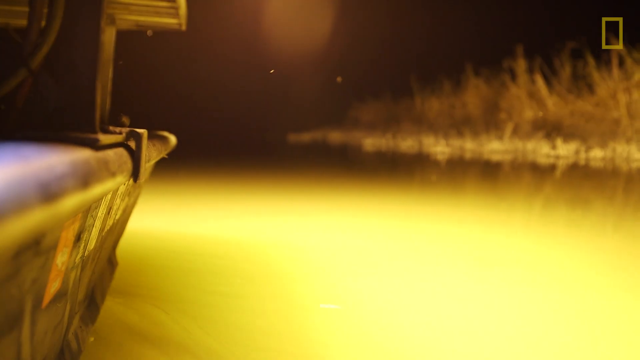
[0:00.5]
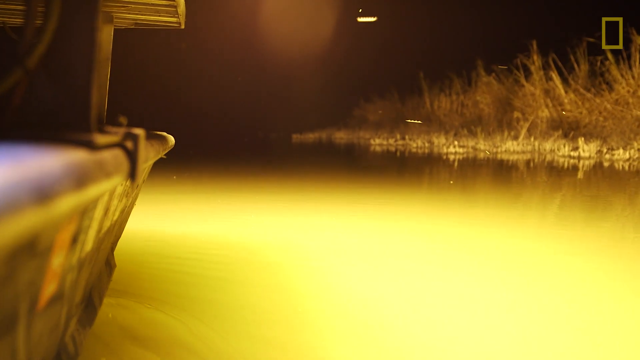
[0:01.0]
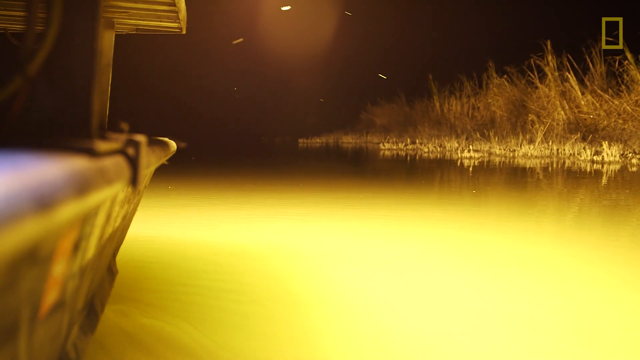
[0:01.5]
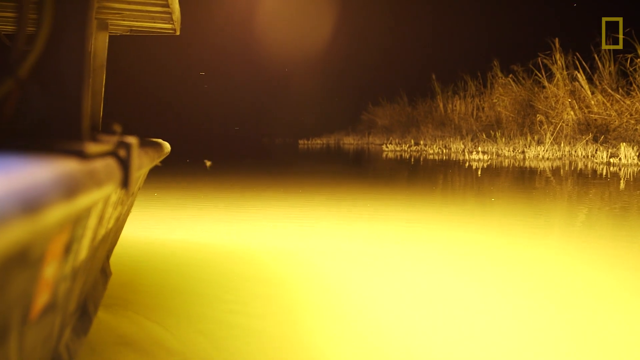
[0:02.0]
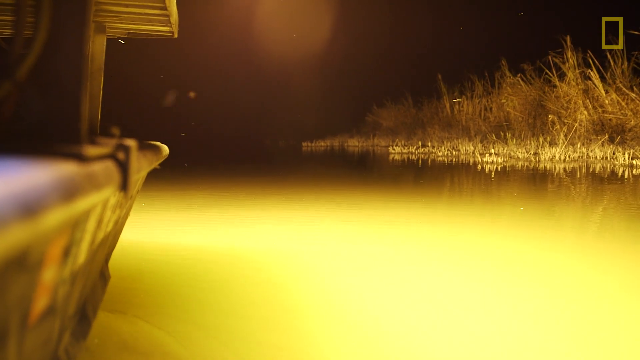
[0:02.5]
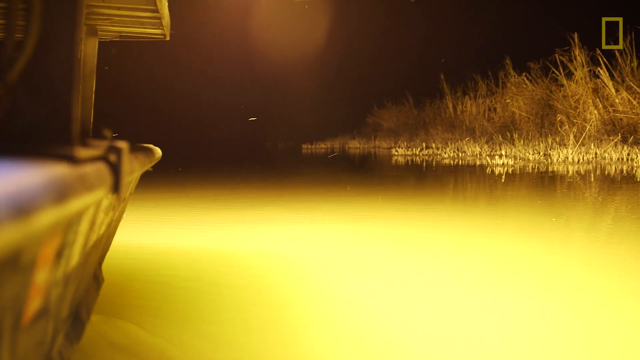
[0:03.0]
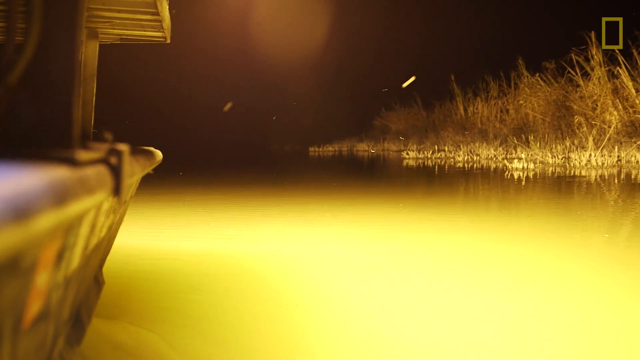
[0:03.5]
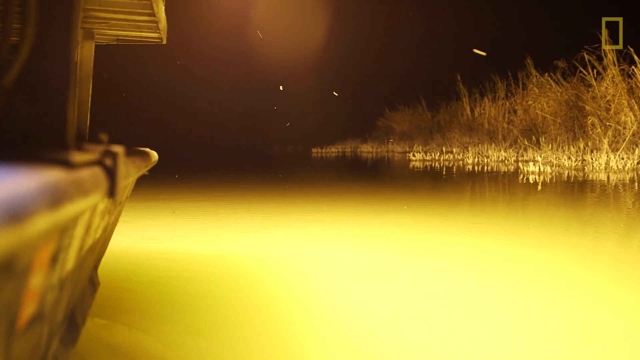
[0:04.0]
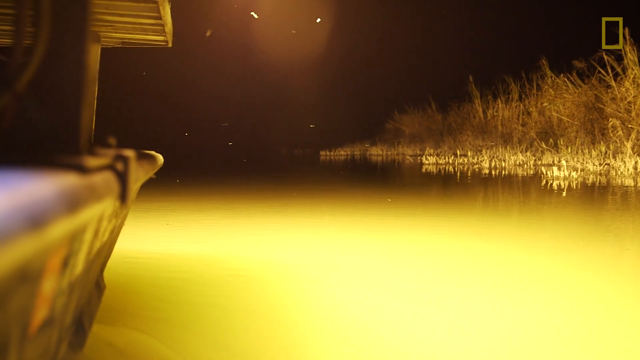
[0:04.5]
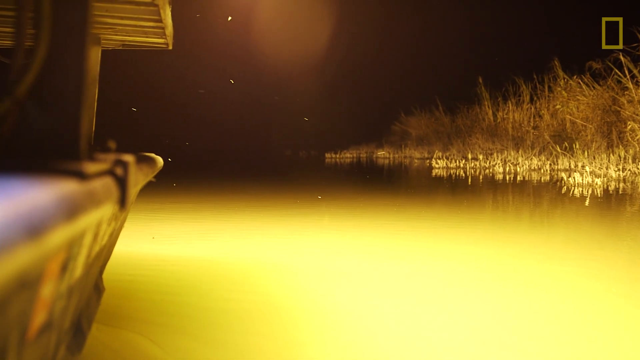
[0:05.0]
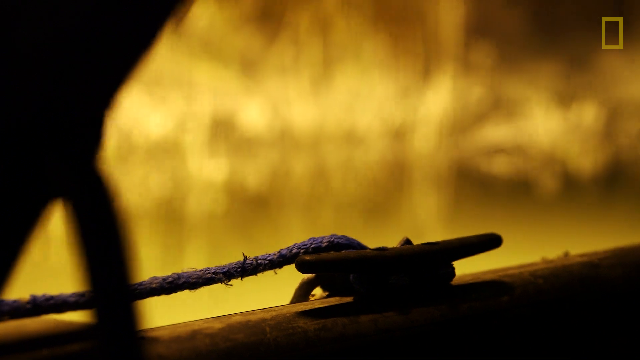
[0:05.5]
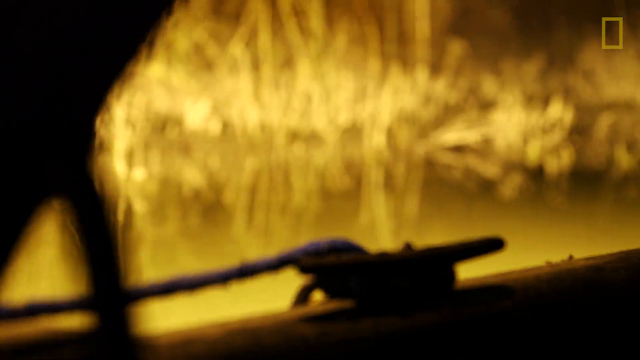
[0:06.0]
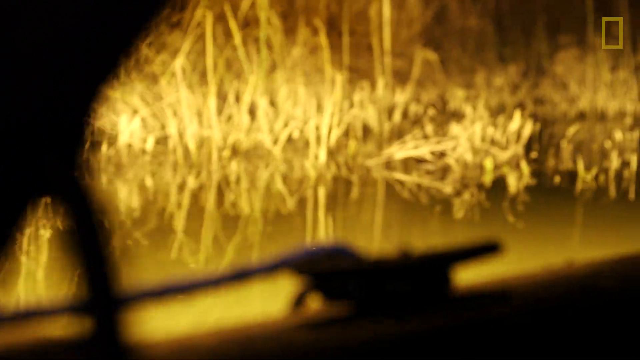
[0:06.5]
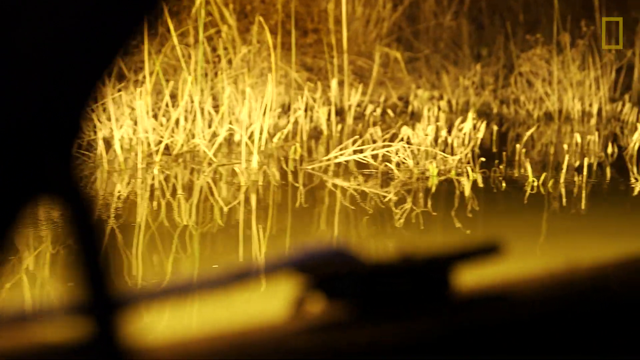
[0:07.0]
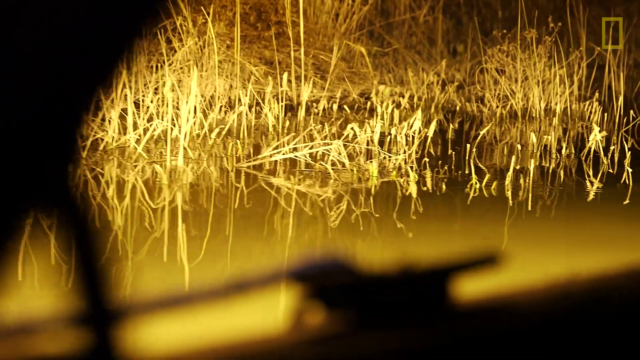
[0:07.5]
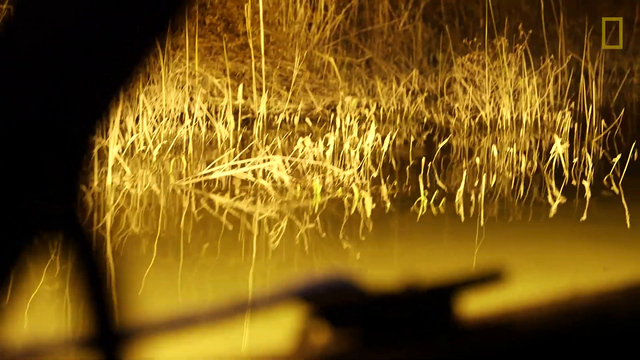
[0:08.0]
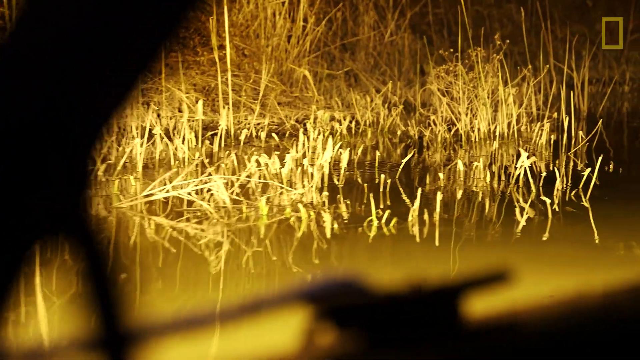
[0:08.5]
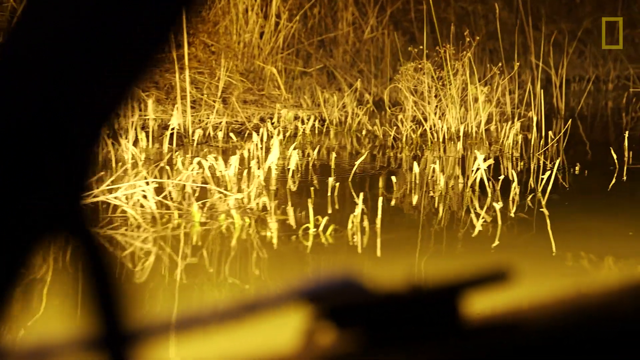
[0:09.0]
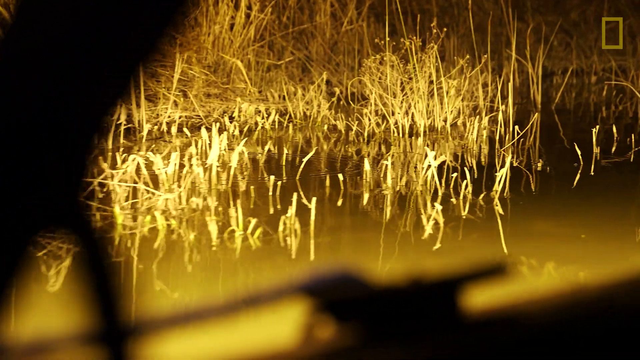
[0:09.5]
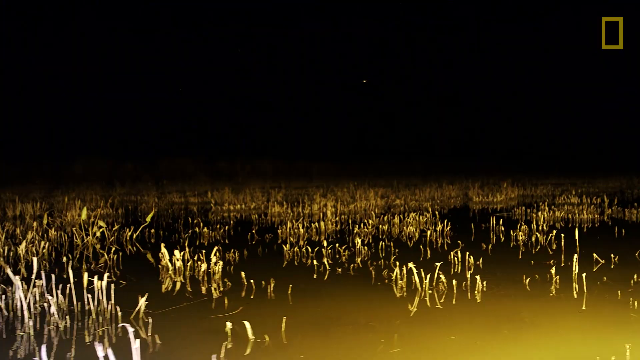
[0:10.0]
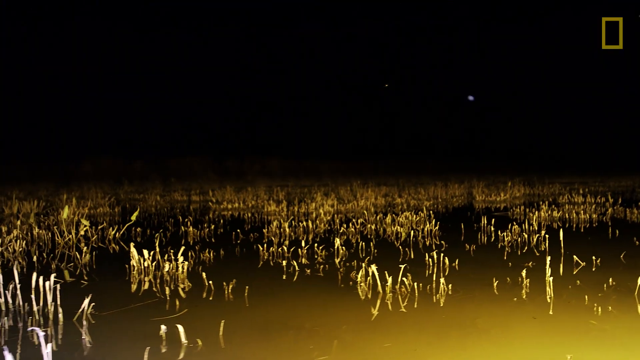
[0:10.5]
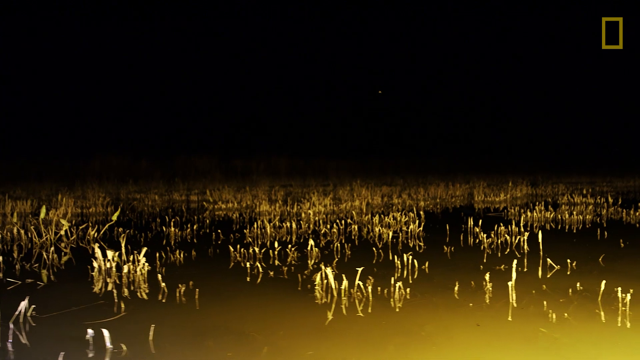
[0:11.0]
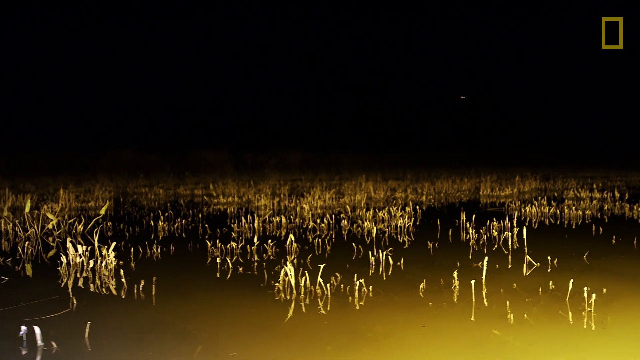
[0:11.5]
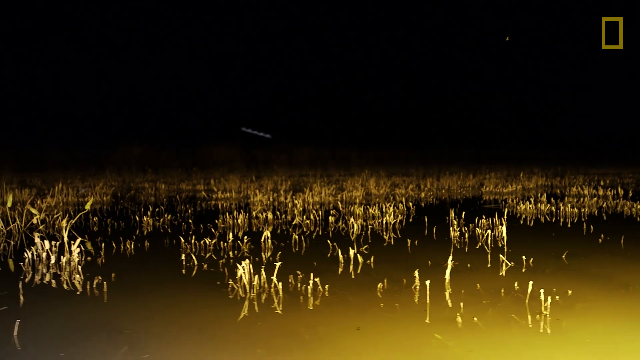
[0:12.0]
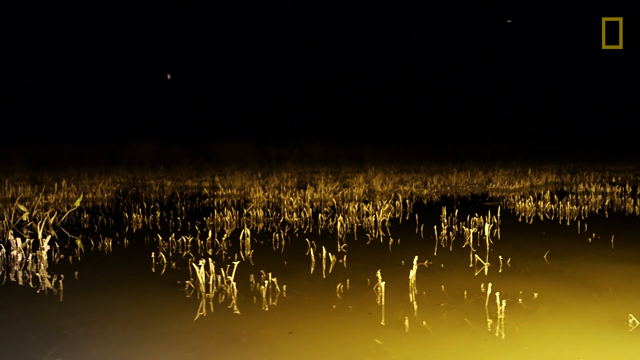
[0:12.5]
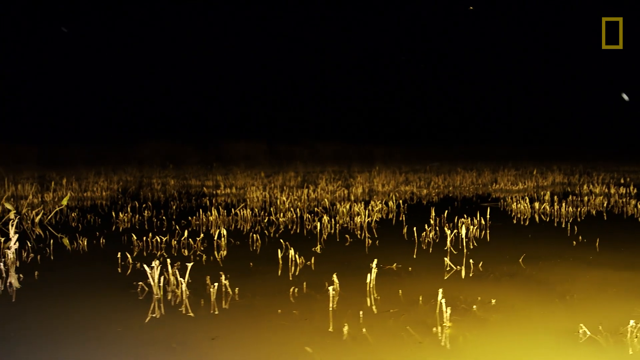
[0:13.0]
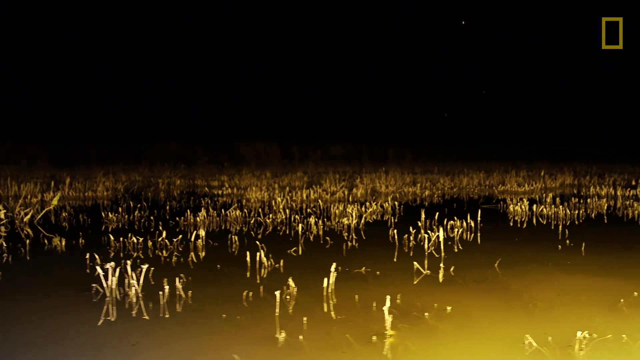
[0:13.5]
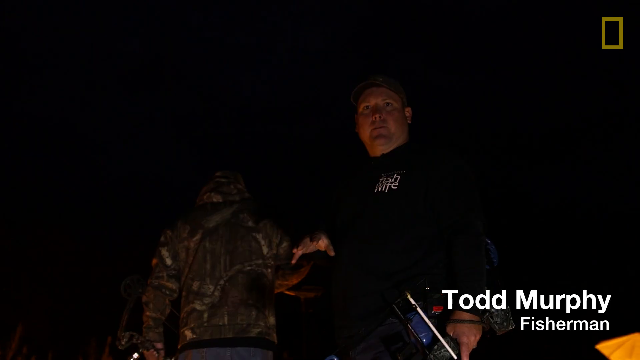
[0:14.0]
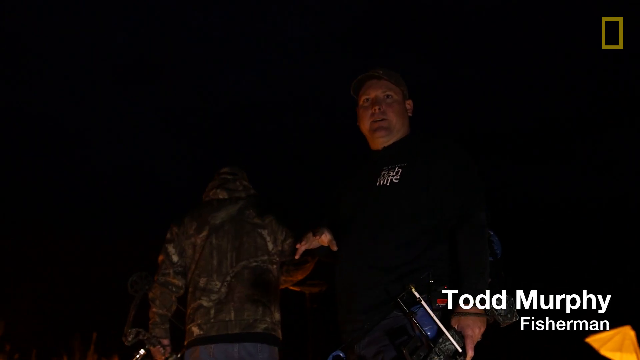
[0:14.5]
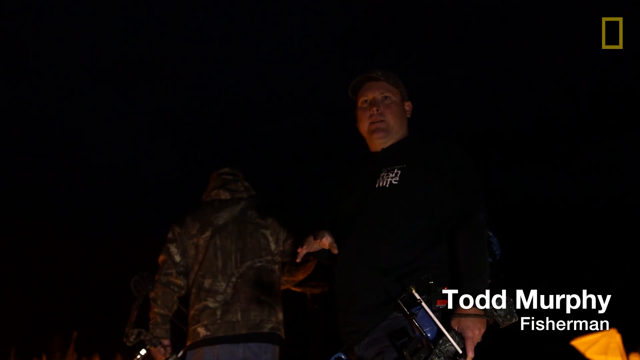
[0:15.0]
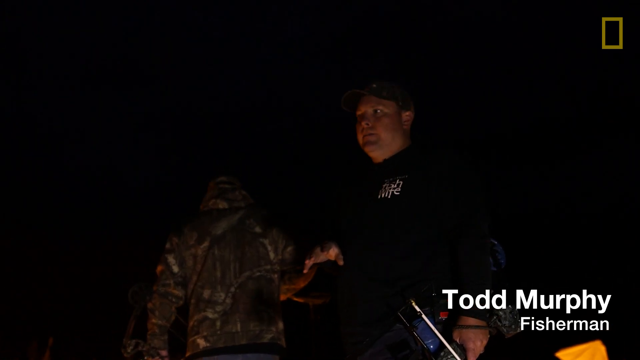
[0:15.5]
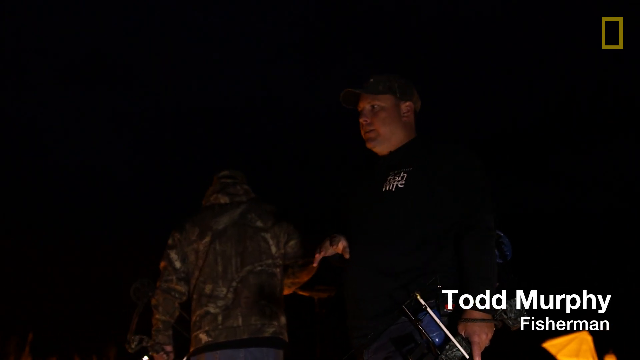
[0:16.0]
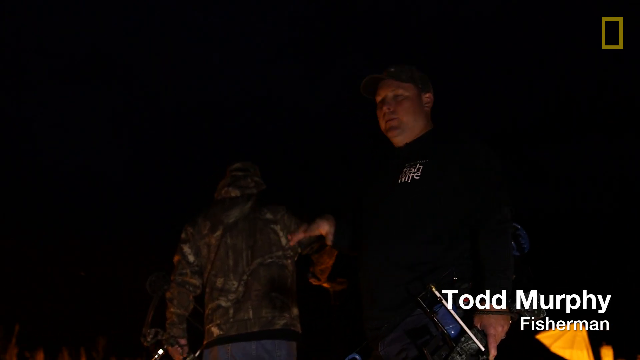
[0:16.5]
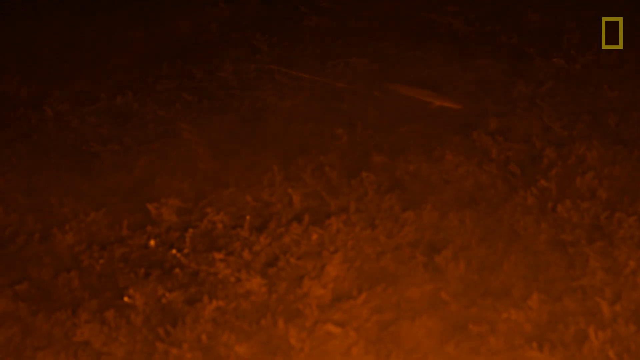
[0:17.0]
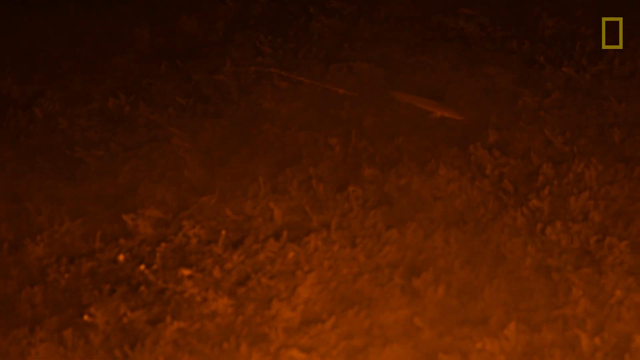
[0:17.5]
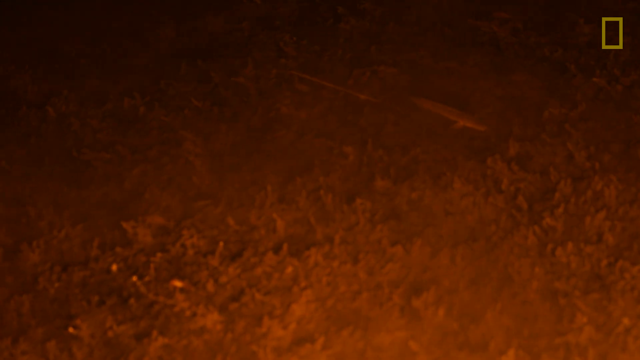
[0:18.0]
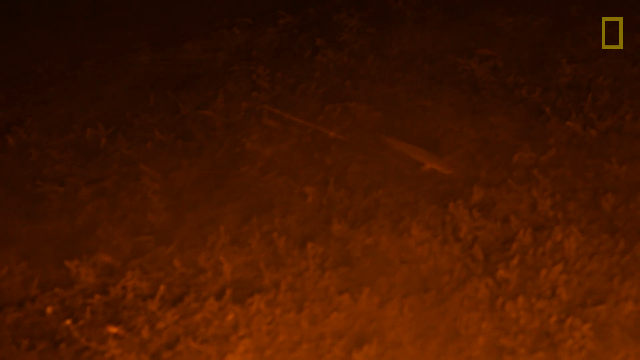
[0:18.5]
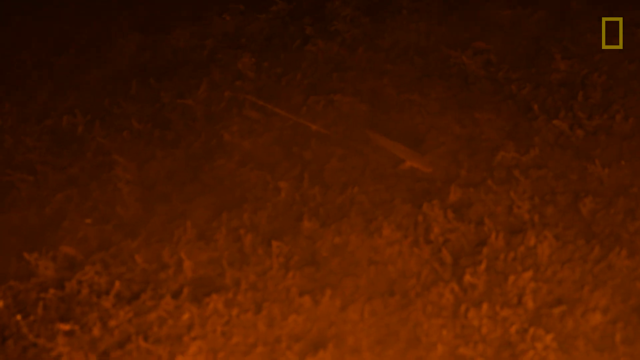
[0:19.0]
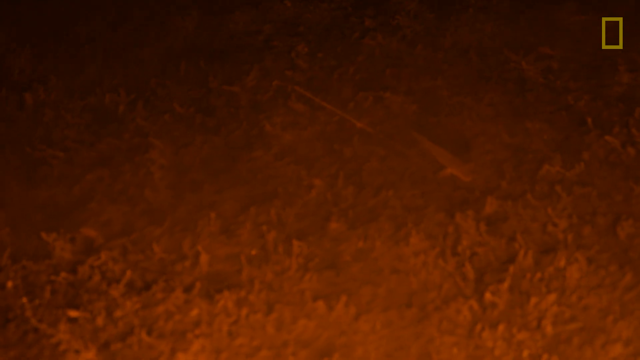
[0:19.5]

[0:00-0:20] Late at night, a man is fishing in what looks like a swamp. The fish he is after appears to be a catfish, and he seems to be trying to catch one. Many gloomy things appear to be flying around in the air.